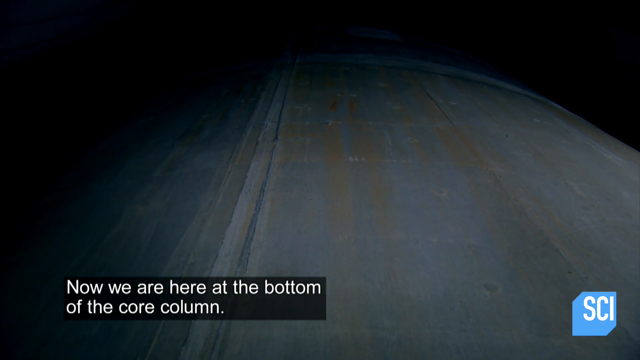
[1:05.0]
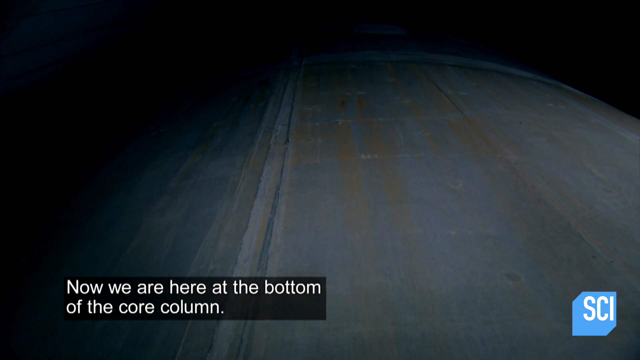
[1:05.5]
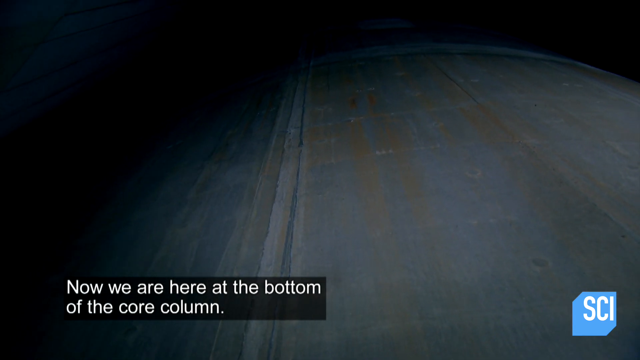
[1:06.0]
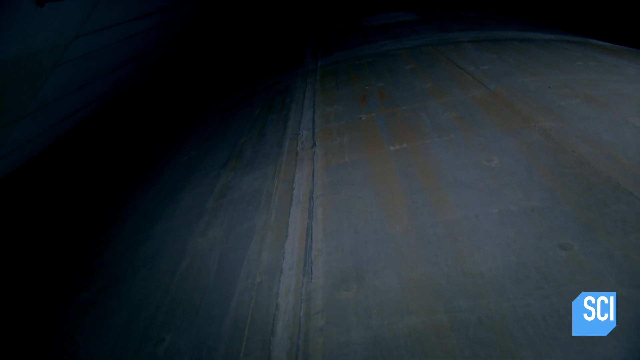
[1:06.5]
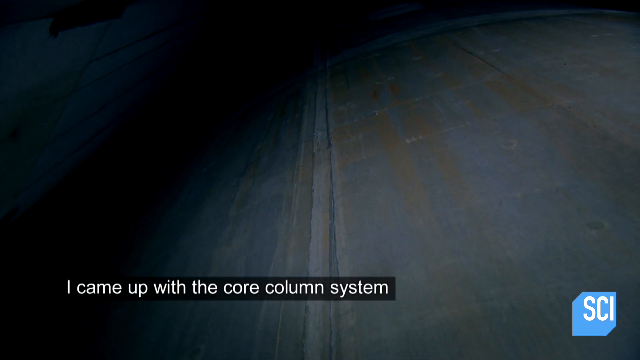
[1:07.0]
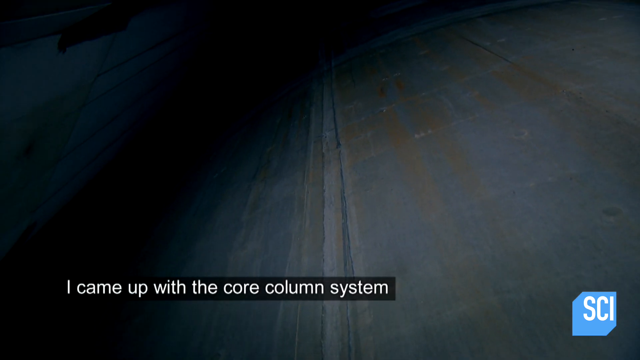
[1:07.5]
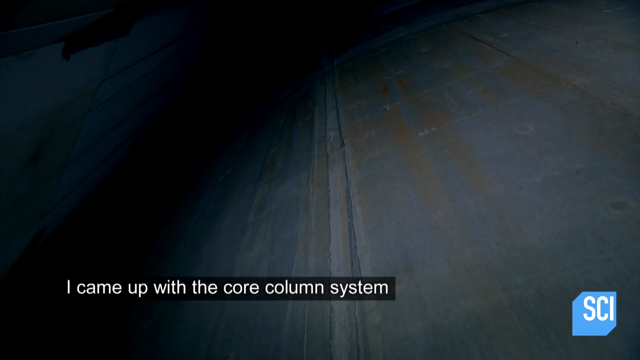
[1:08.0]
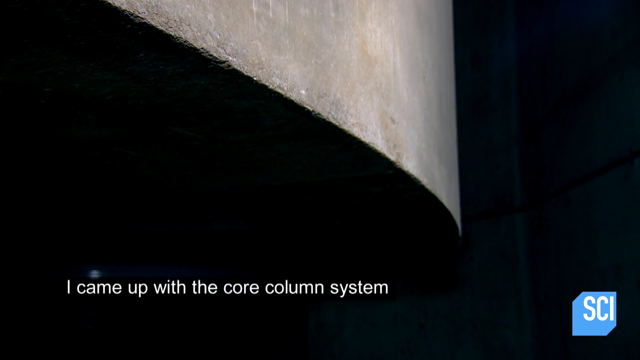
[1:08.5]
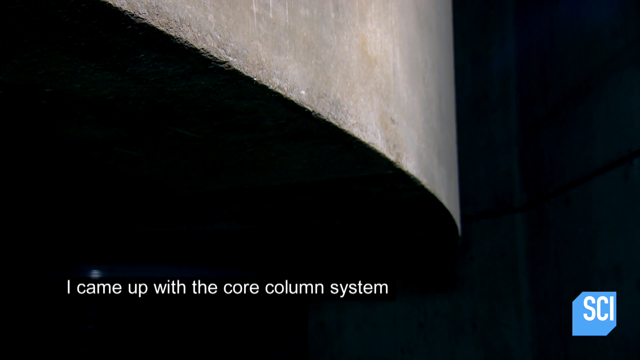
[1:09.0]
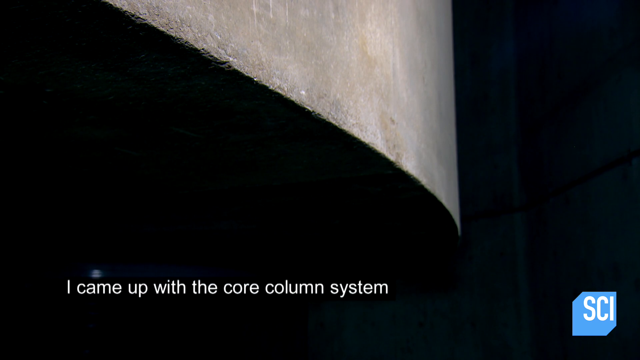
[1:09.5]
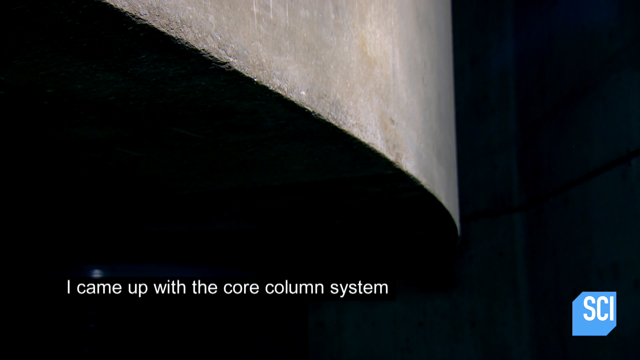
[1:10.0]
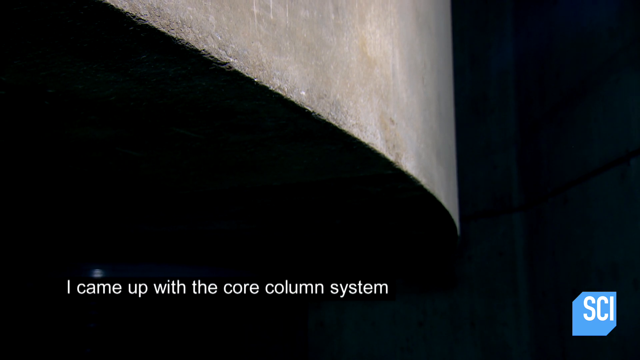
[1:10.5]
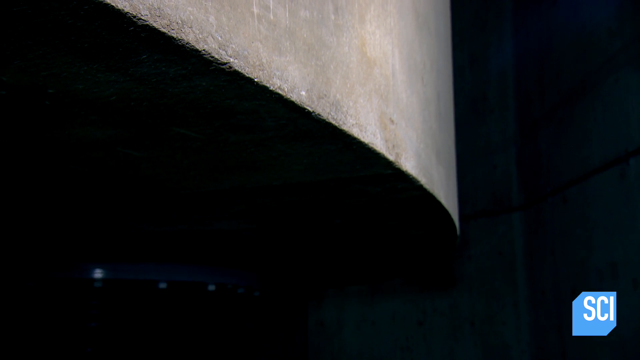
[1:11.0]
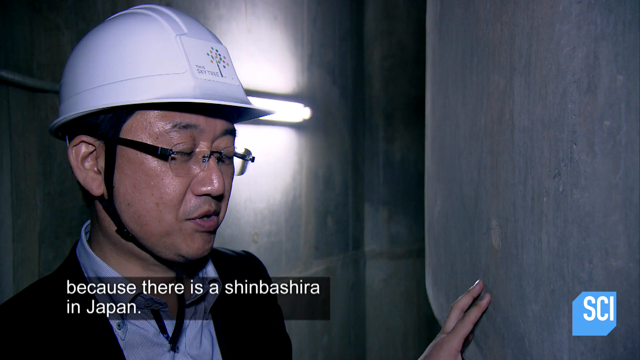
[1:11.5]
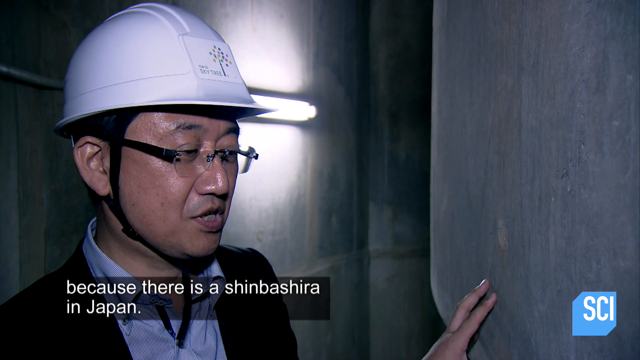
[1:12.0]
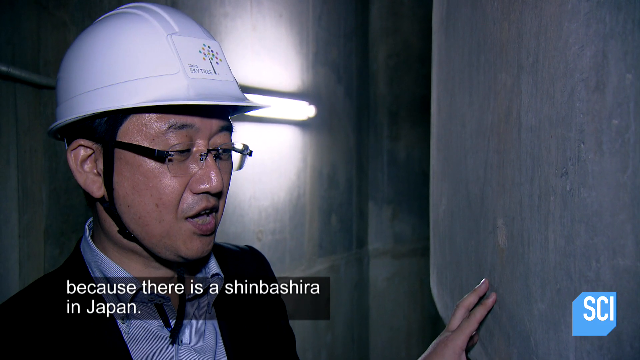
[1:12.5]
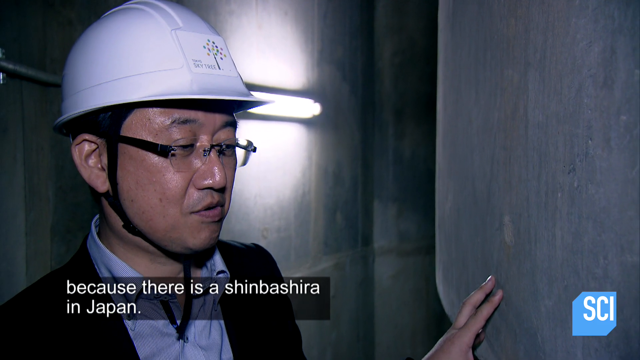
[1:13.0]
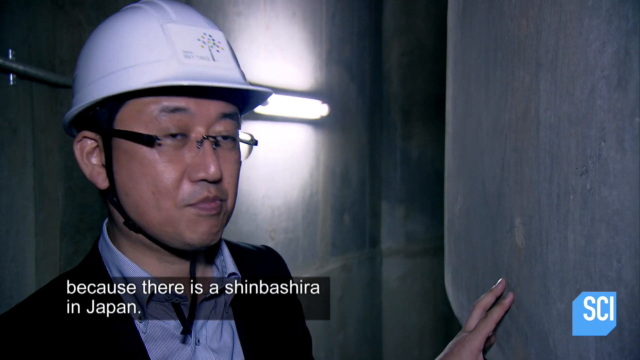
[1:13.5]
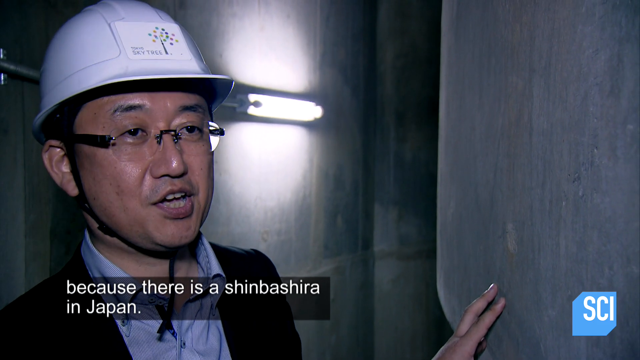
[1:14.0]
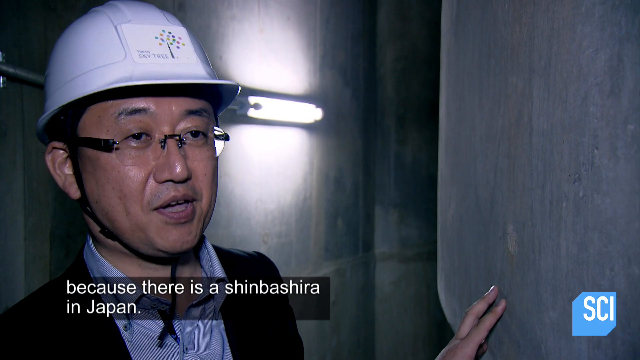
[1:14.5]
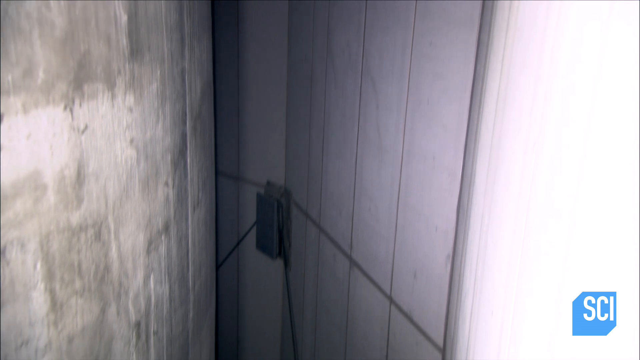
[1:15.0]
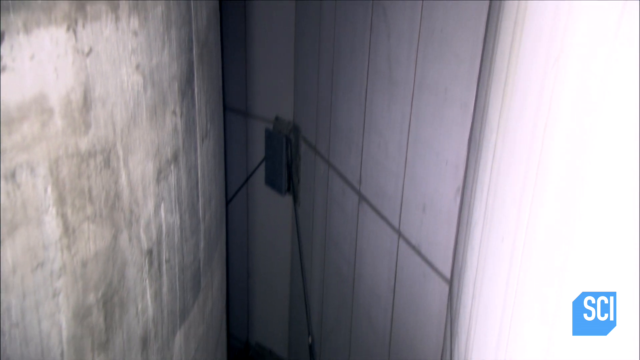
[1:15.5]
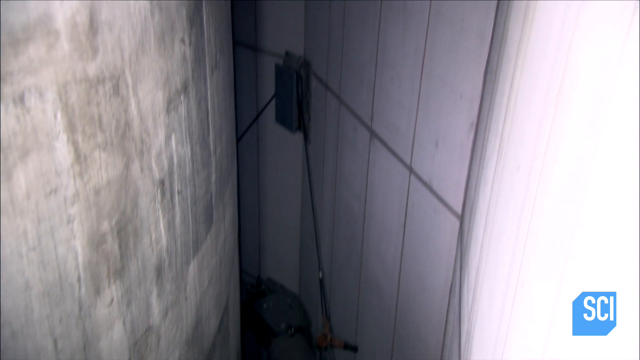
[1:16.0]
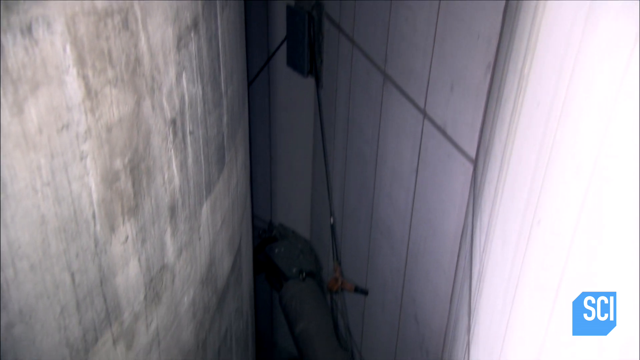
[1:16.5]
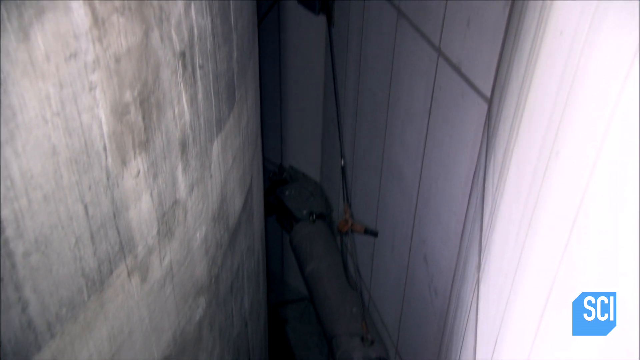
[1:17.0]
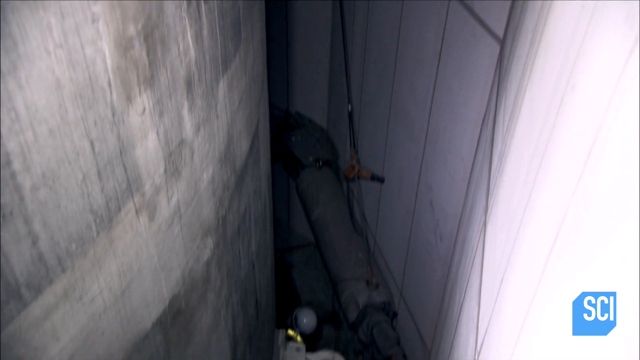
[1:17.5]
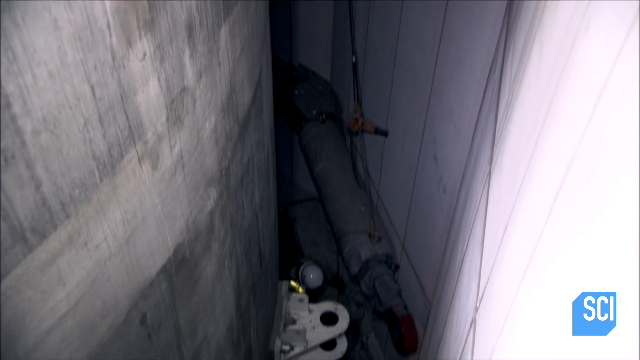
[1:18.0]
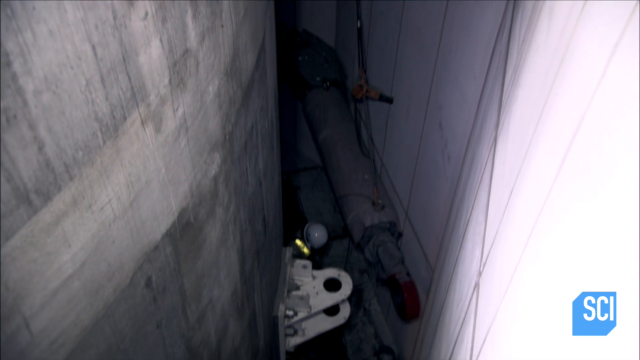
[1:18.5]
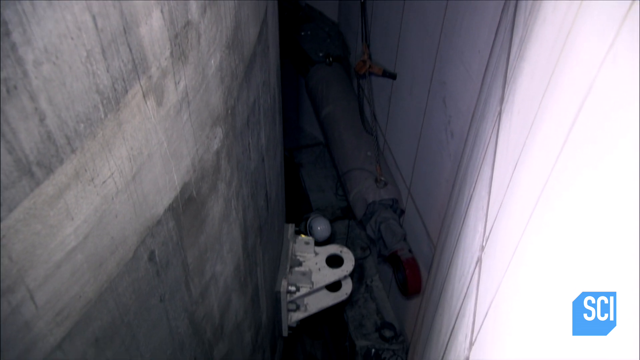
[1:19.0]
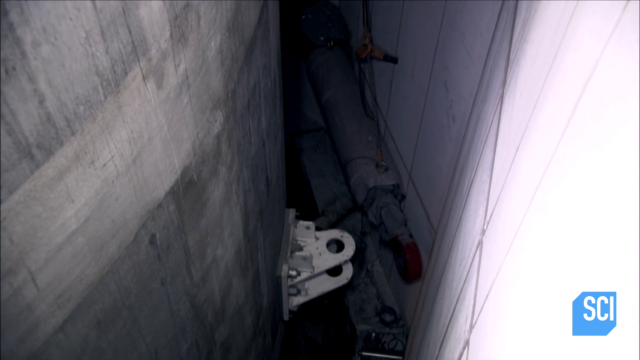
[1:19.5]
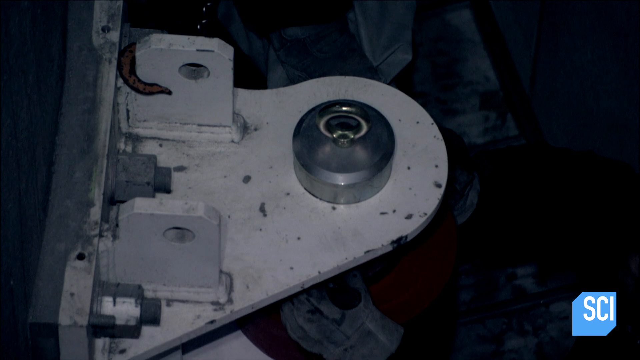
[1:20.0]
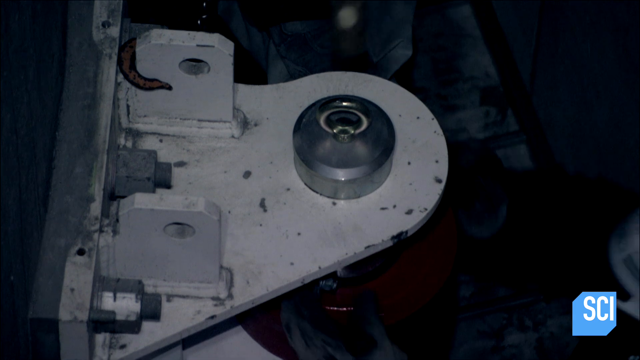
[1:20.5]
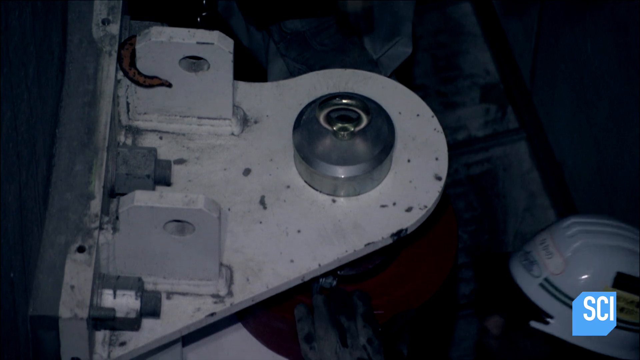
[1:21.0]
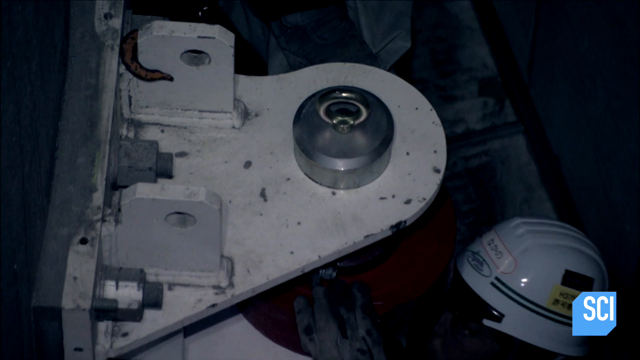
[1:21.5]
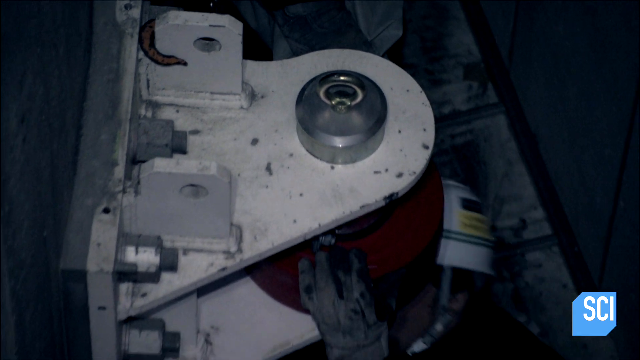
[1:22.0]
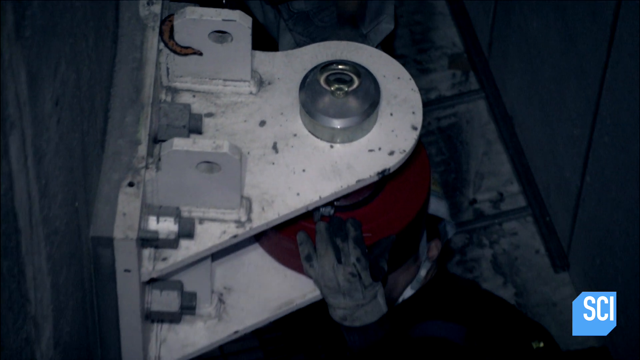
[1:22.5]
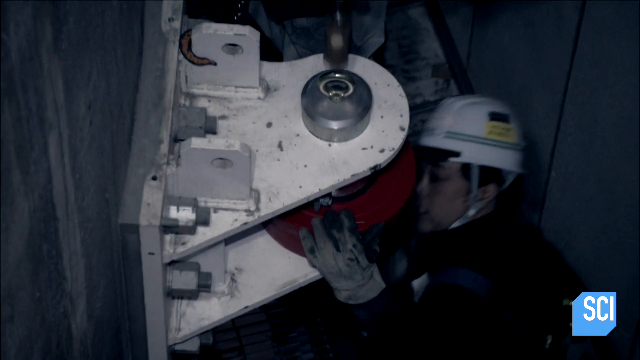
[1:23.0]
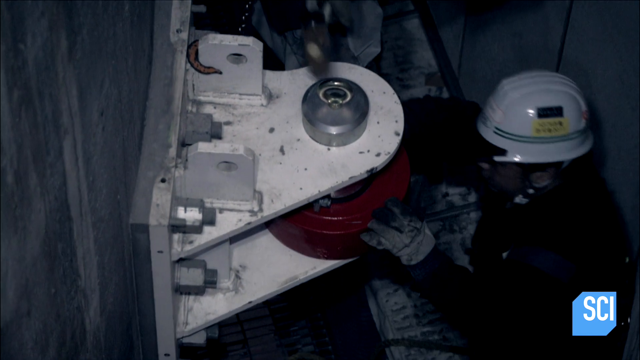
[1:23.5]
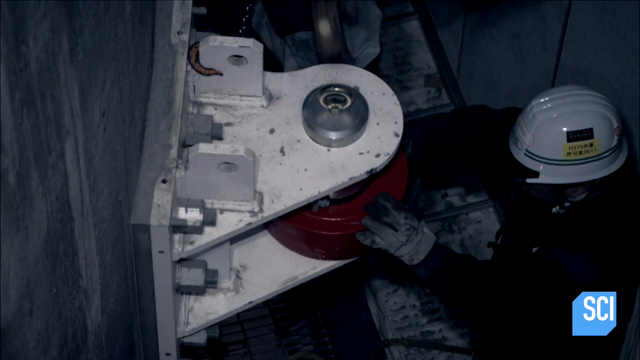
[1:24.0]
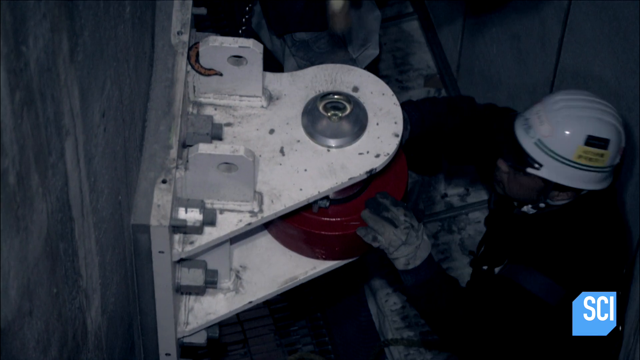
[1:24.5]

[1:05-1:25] The engineer is shown, and different views show people working inside among the big components of the system. Someone hammers a giant screw into the structure. The location is shown for the first time: Japan. An employee wears PPE, including gloves, a blue work suit and a white hard hat; the shot is too far away to make out any wording on the hard hat or the company the workers are with.